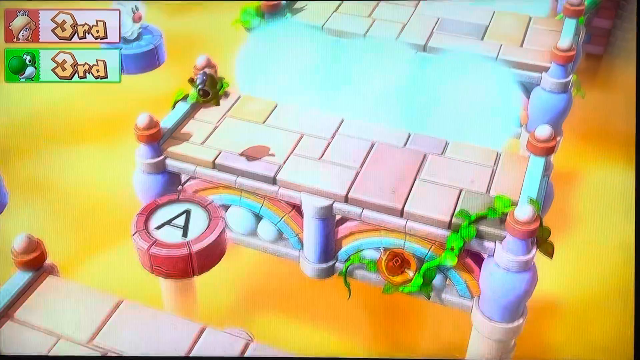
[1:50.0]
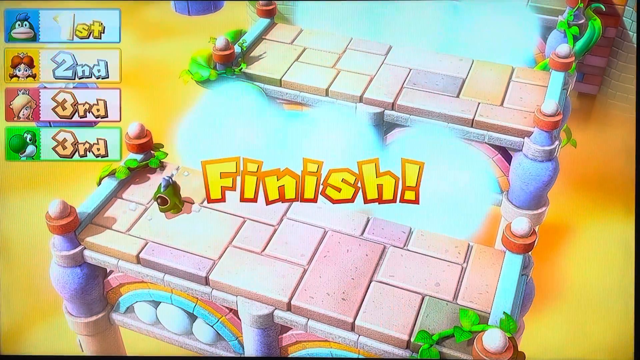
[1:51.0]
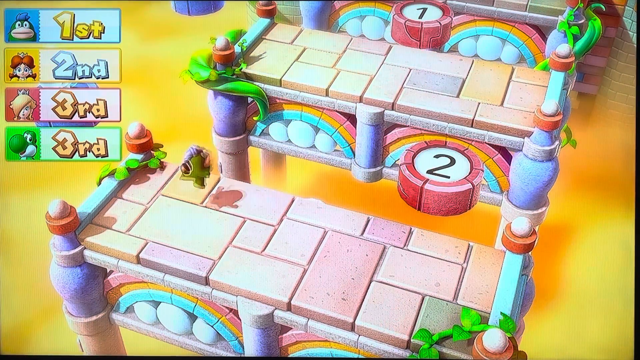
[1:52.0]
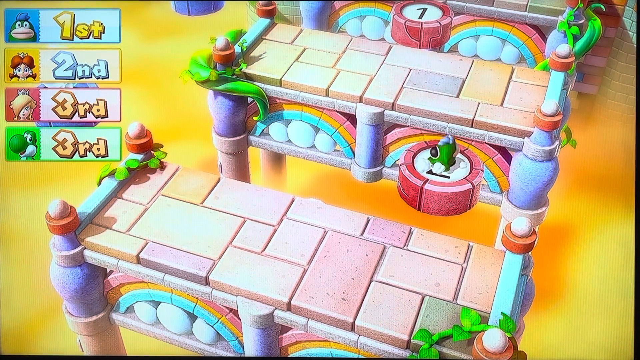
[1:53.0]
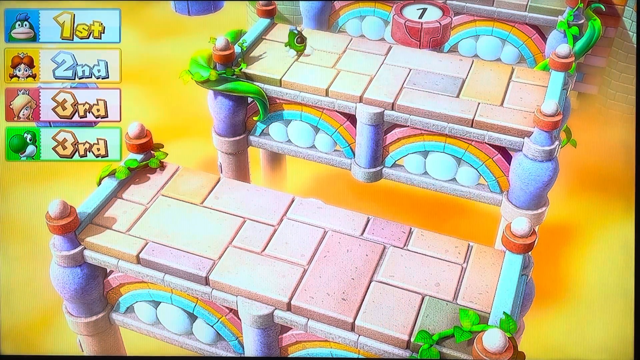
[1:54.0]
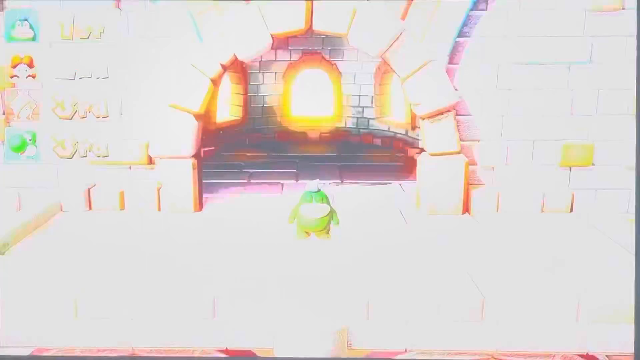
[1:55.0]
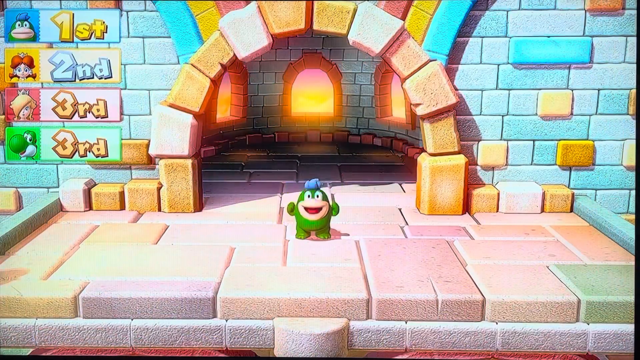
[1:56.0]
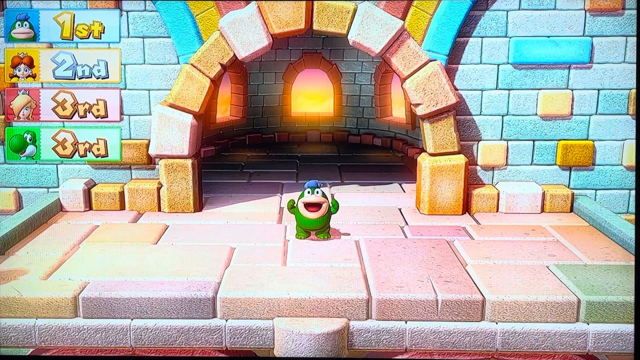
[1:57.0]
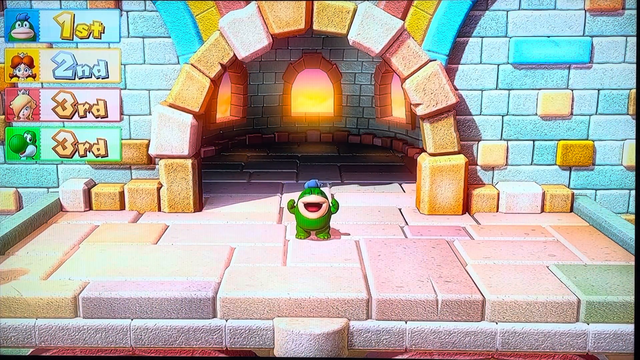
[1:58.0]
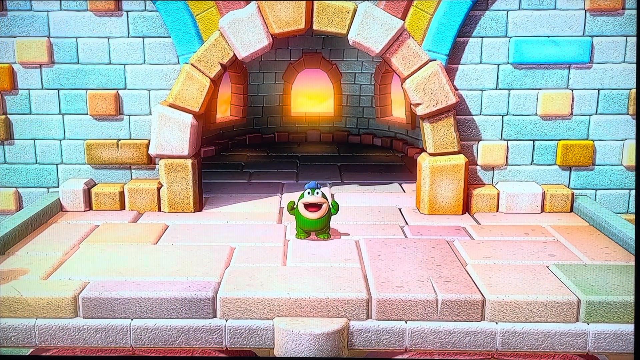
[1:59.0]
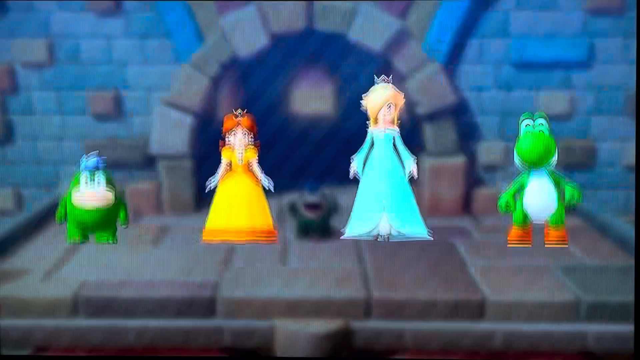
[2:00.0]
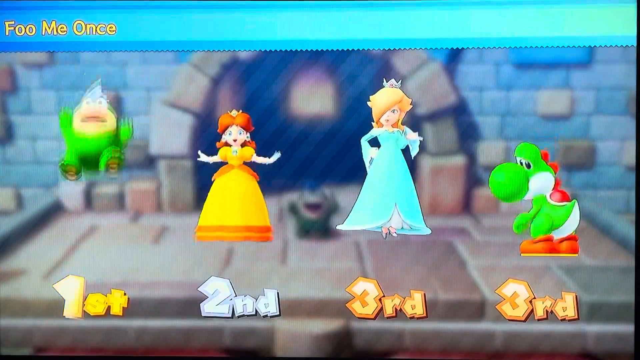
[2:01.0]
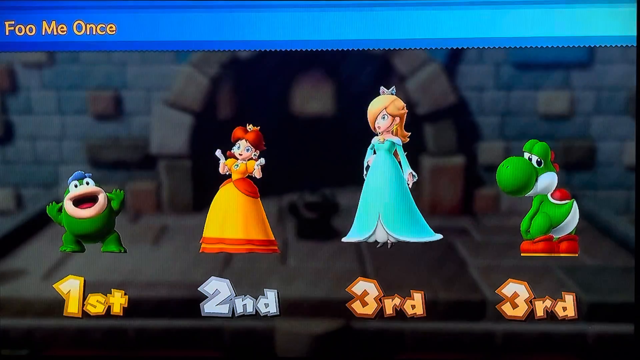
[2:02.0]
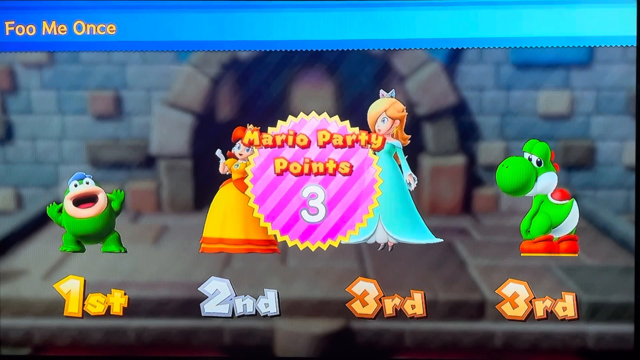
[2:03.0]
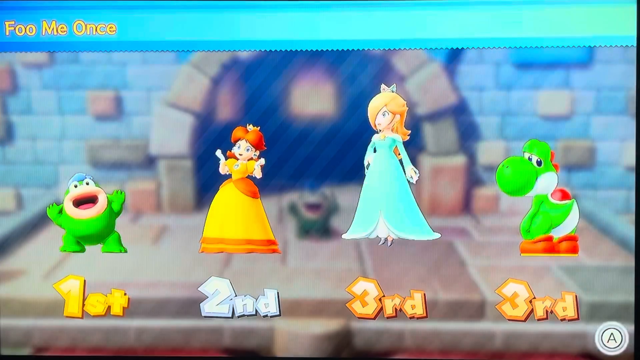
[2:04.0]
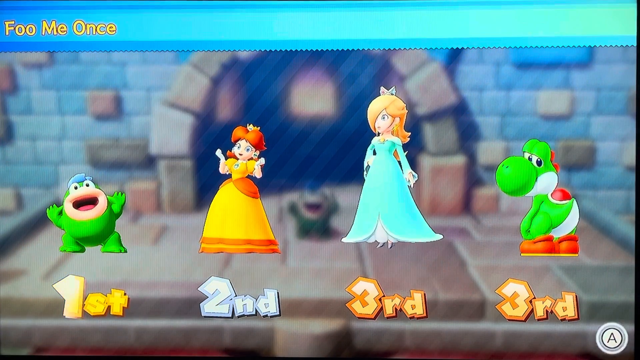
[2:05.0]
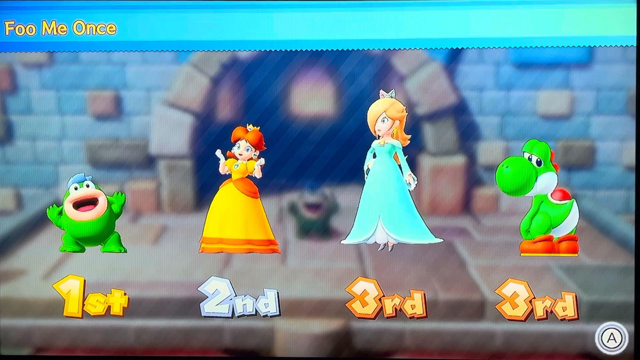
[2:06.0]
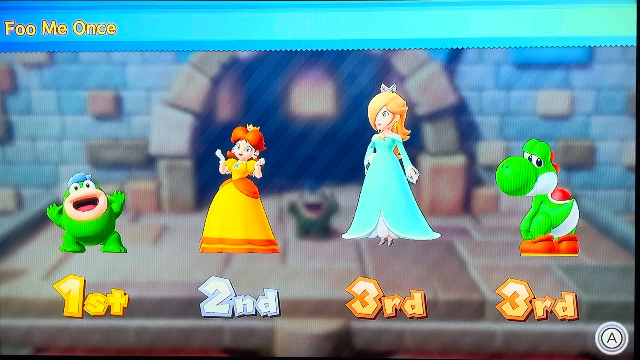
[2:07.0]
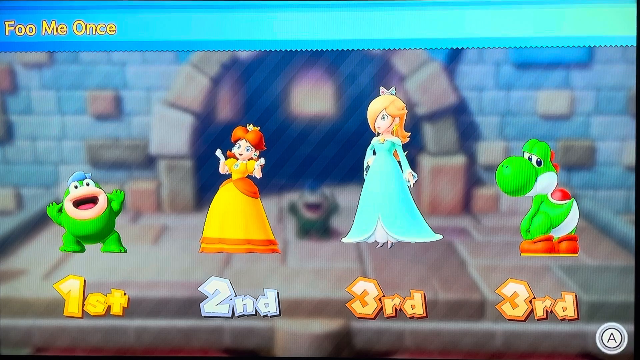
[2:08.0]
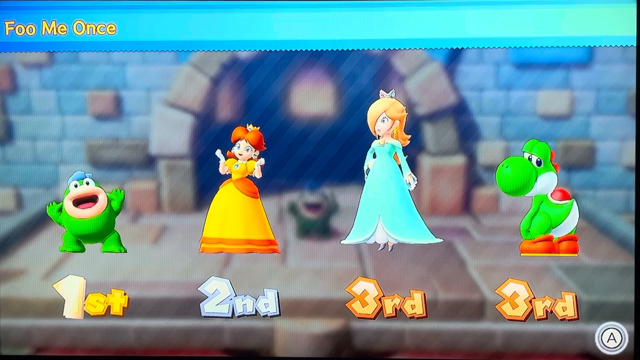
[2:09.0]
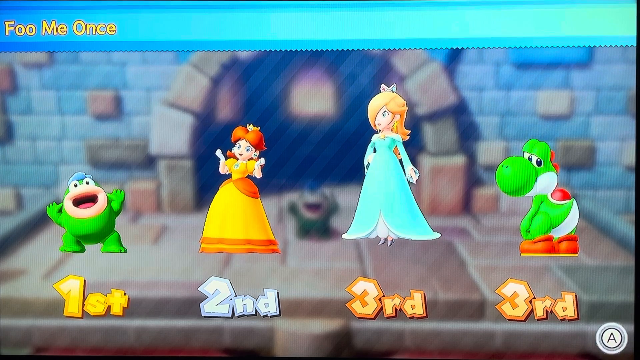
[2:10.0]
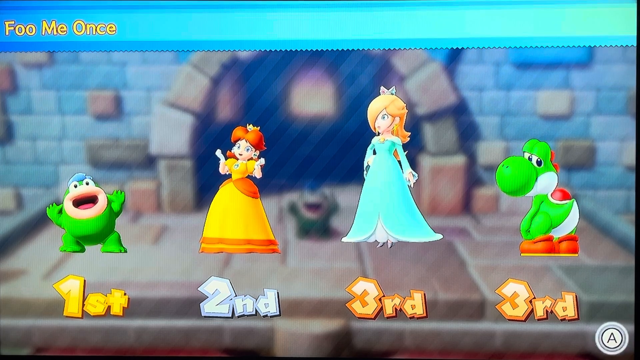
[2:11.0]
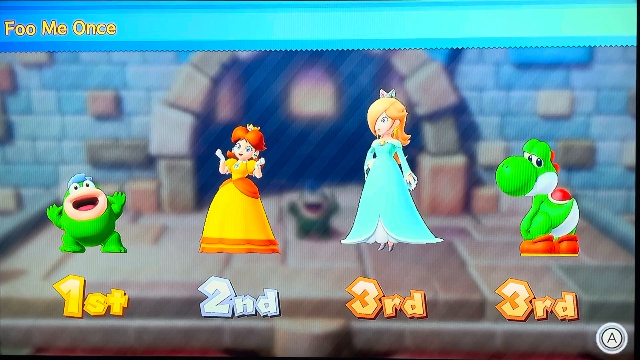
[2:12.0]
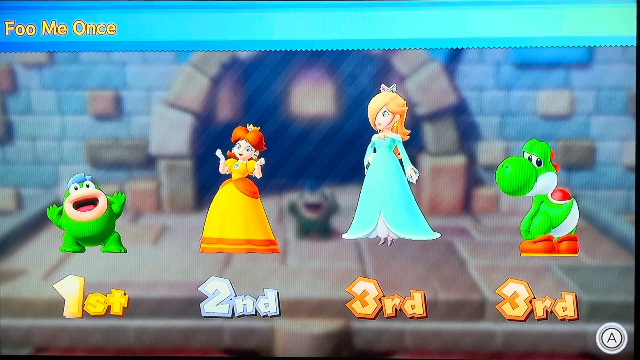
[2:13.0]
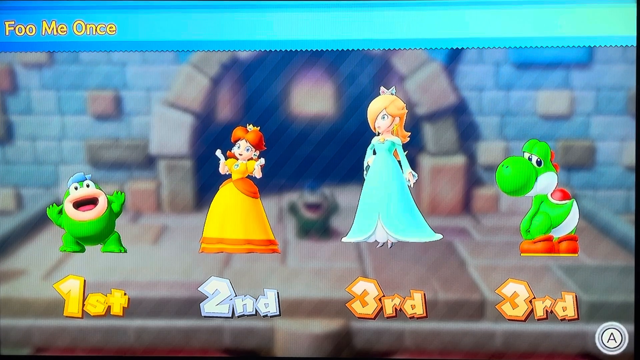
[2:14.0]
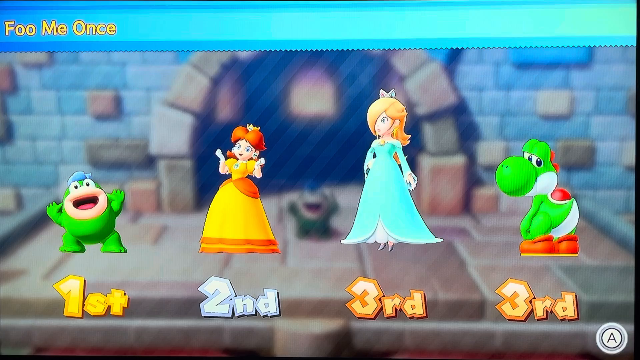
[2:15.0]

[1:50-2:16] Player one wins the game as all the other players fall off; when the last player falls off, the game is over. Daisy is the final survivor. The opponents are all computer players. The map, Fool Me Once, is apparently Peach-themed. Player one is victorious with the penguin character.